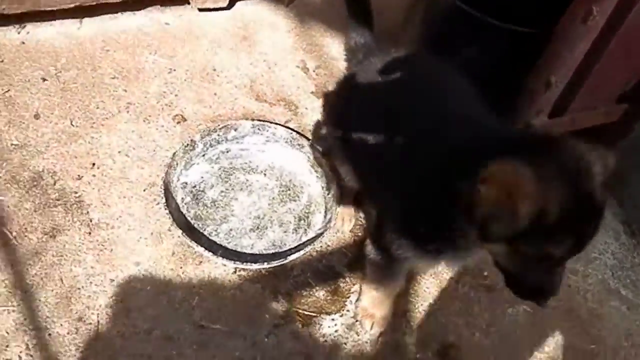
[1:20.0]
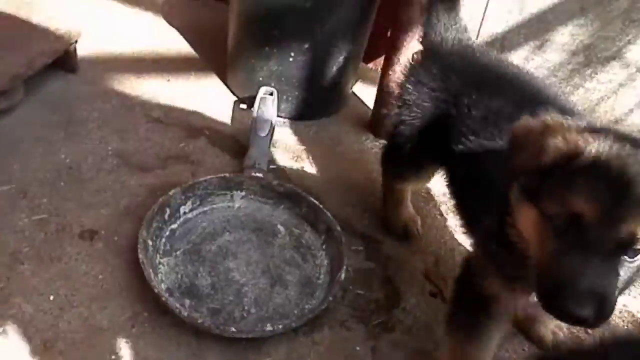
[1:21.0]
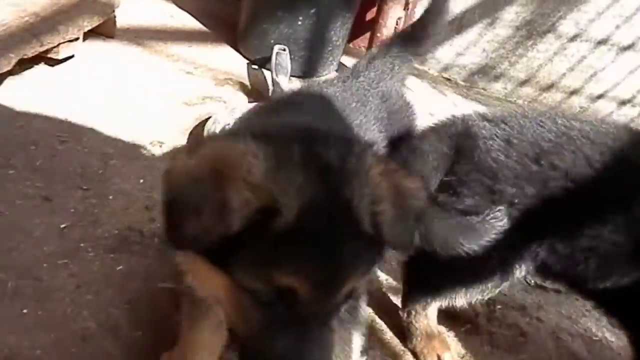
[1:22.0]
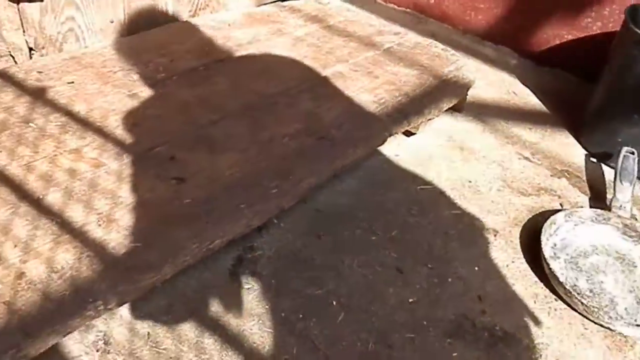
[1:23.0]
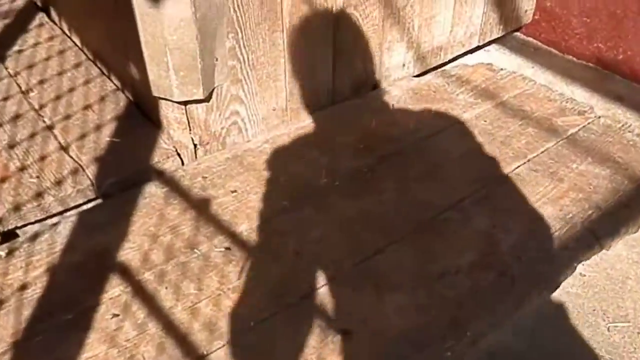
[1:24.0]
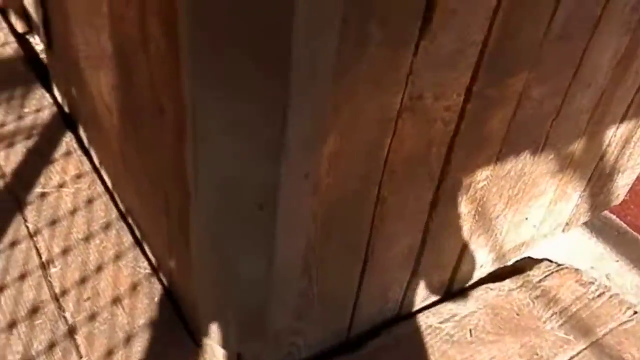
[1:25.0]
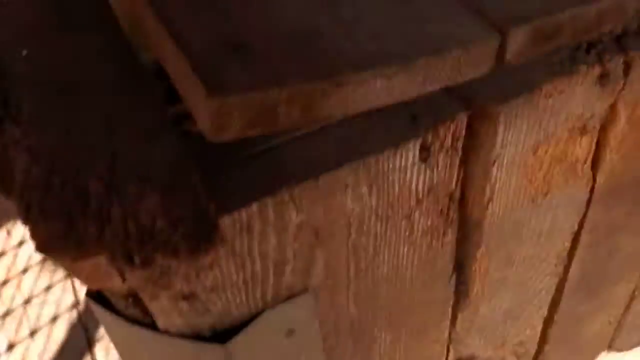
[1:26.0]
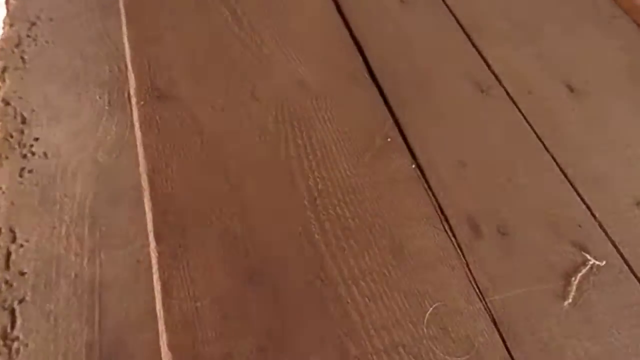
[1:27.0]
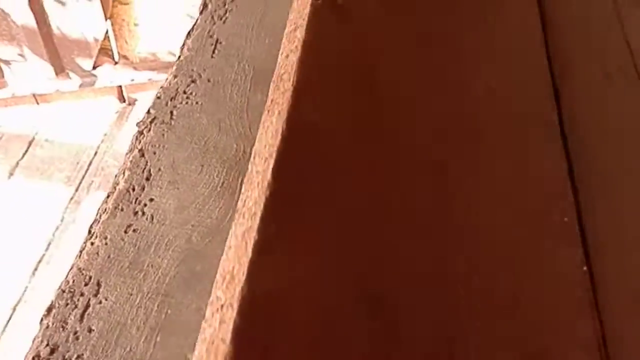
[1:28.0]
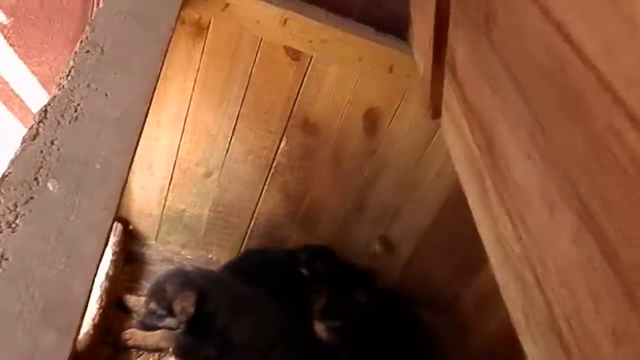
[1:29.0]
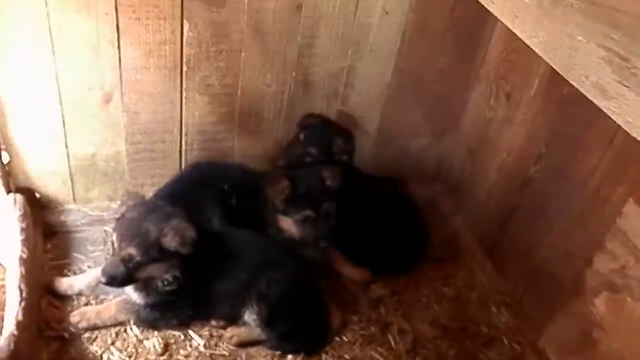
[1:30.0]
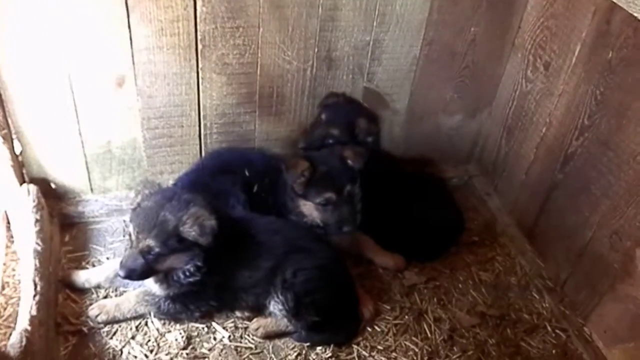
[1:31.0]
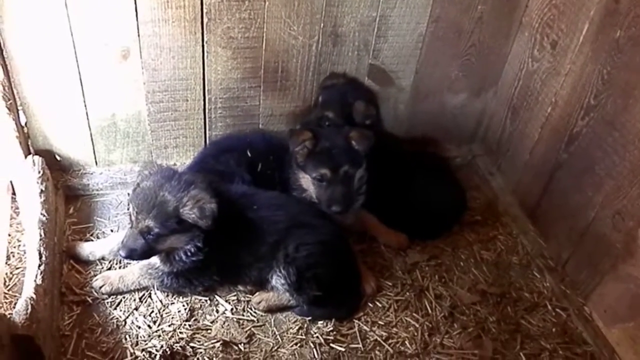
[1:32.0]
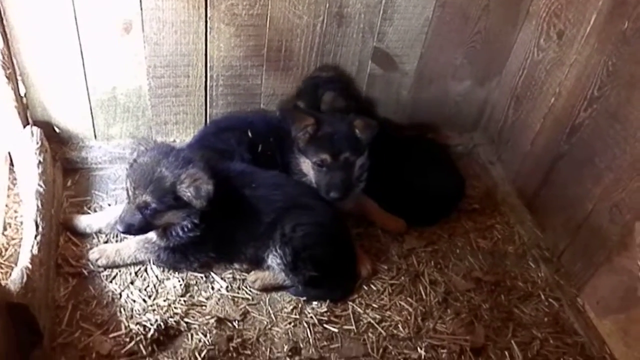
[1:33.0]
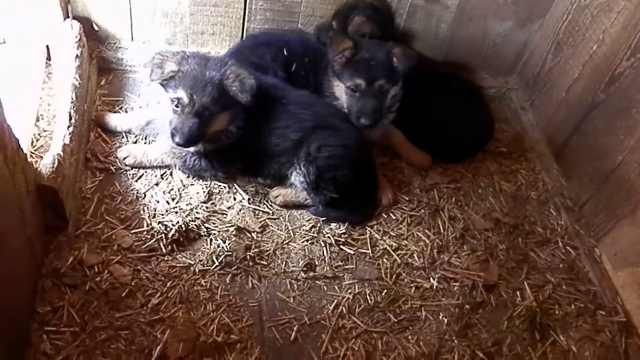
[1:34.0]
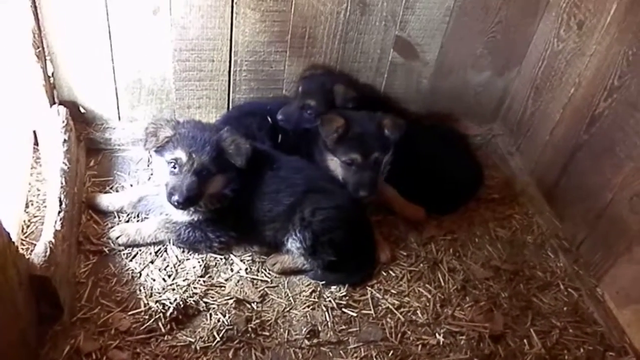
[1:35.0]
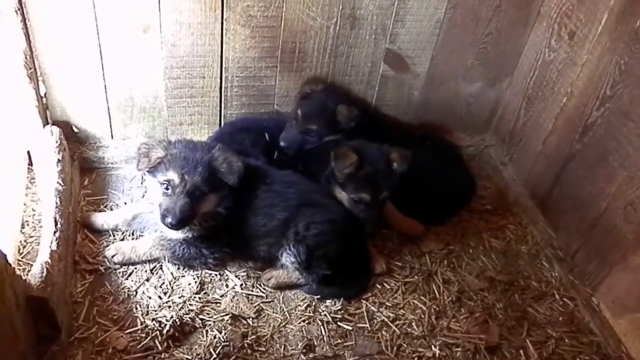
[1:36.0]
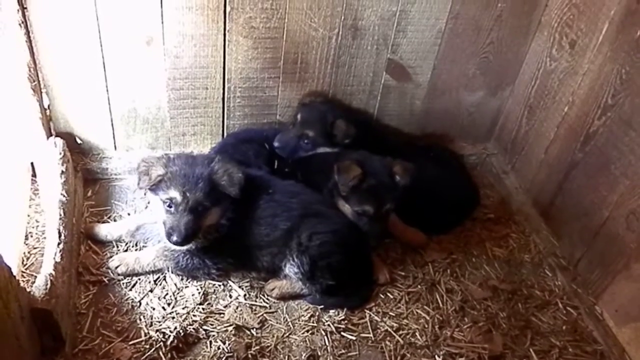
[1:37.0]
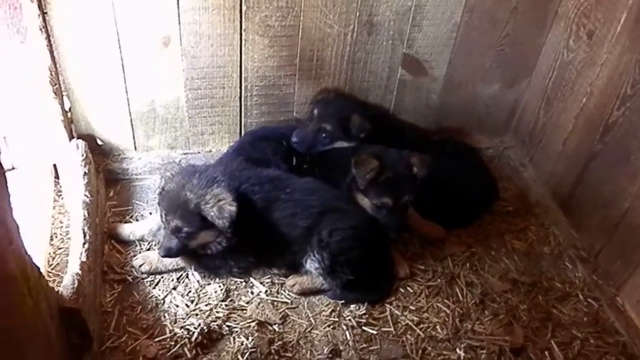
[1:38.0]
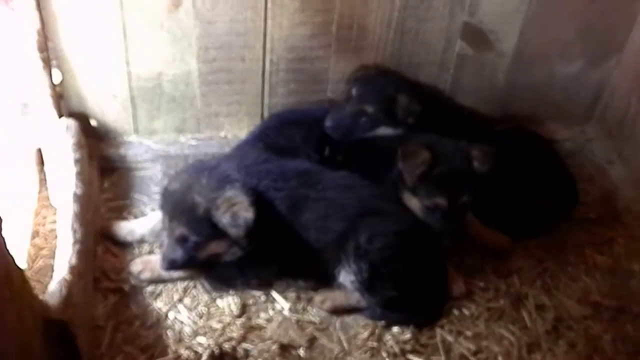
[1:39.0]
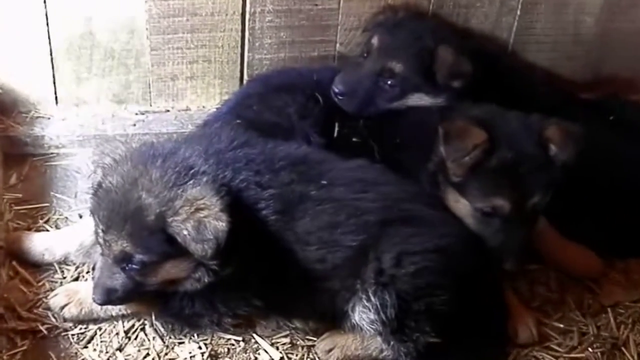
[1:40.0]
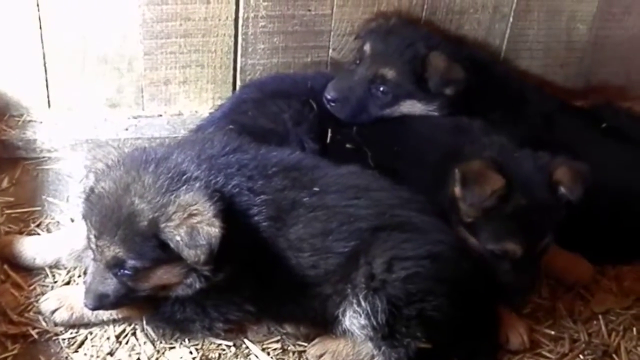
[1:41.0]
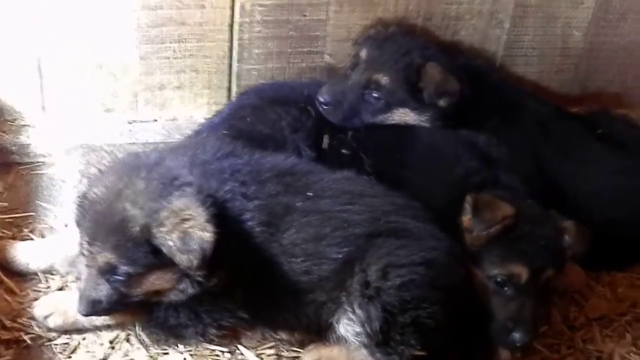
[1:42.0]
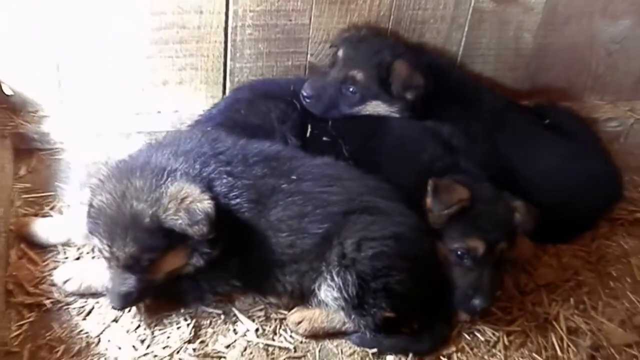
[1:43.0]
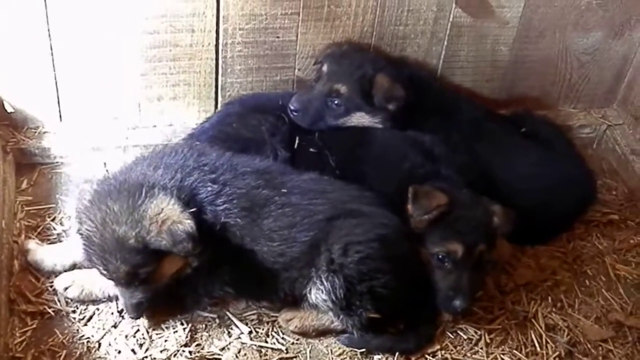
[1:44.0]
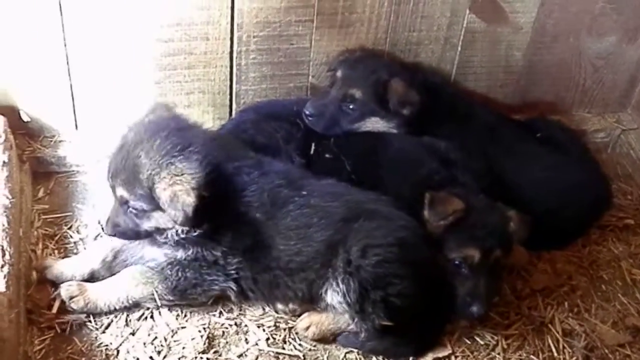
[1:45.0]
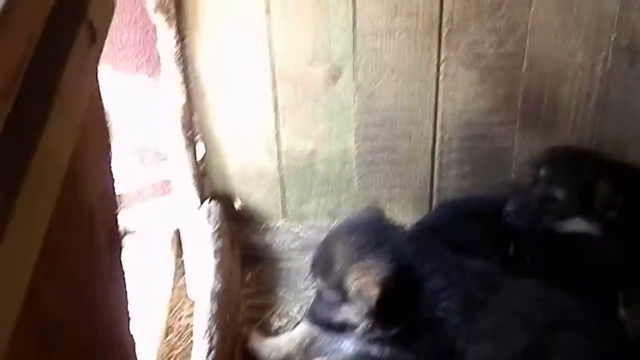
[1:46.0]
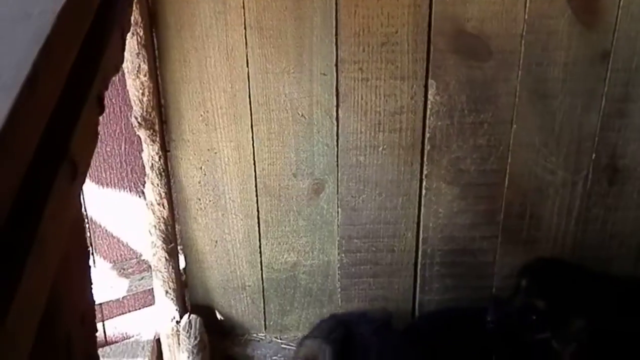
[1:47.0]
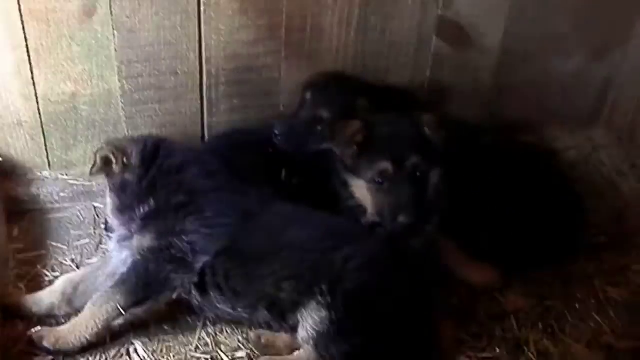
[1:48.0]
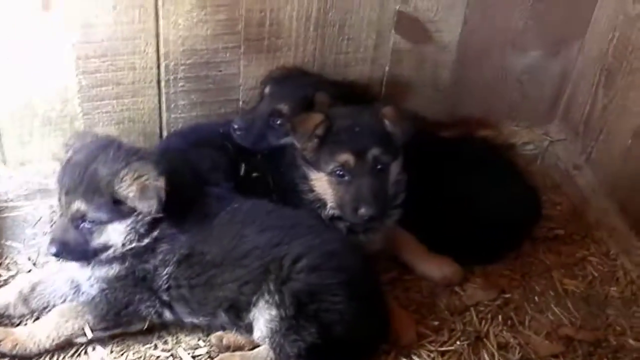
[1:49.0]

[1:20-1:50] The object next to the person seems to be an old pan rather than a plate, perhaps used to cook for the dogs or to feed them. The man stands up, and his shadow is visible. He goes to a wooden trunk and opens it; inside are black puppies that look almost exactly like the older dogs playing outside. The two dogs remain playing outside and do not follow the person opening the trunk. The trunk seems to be opened just to check on the puppies.